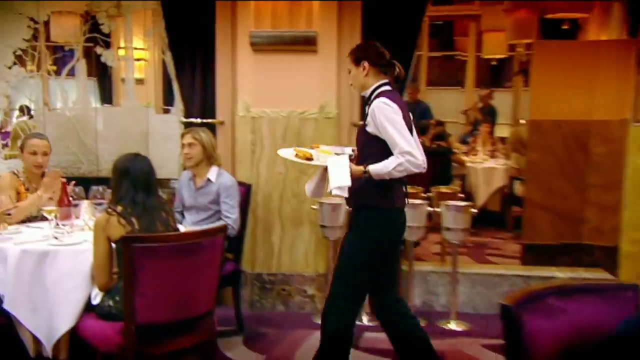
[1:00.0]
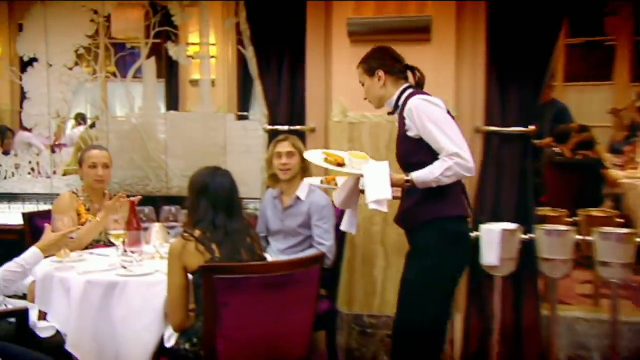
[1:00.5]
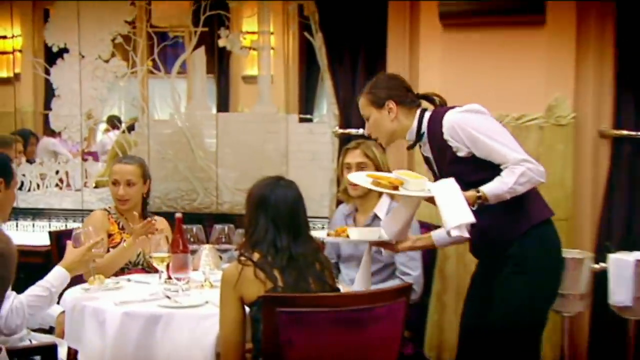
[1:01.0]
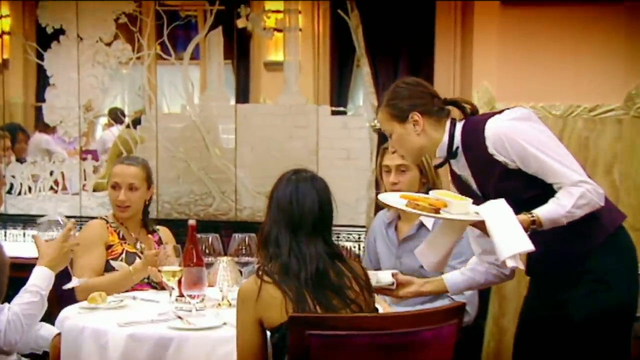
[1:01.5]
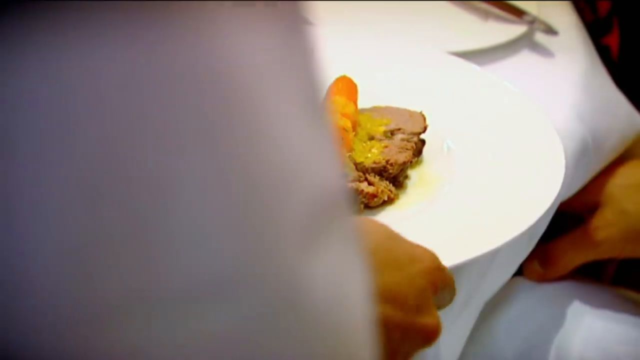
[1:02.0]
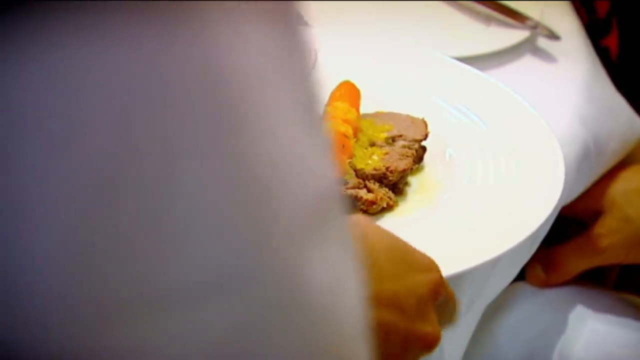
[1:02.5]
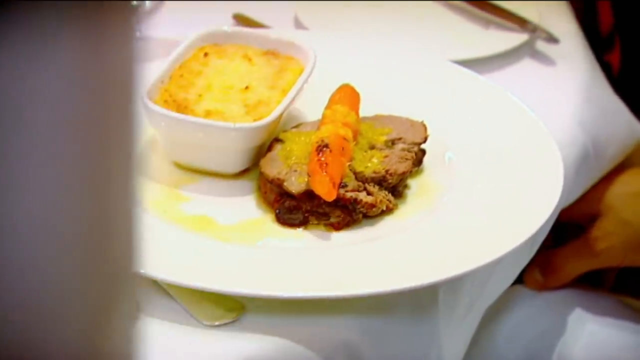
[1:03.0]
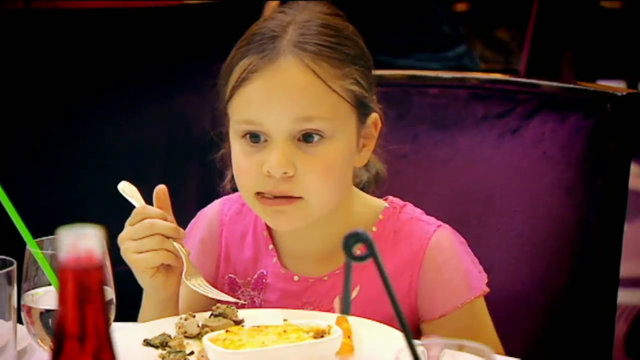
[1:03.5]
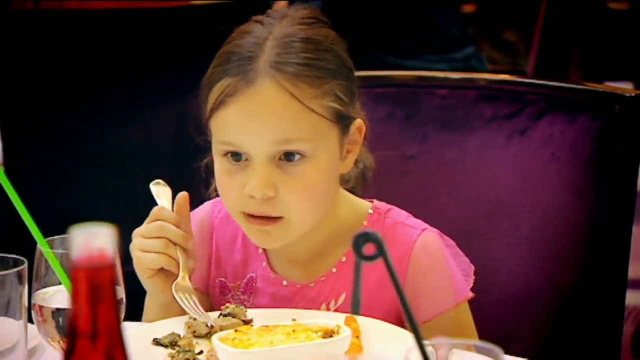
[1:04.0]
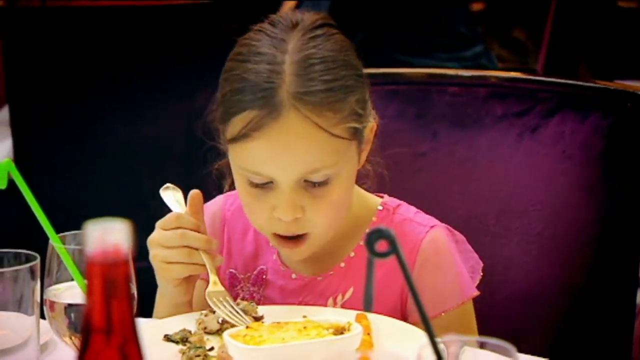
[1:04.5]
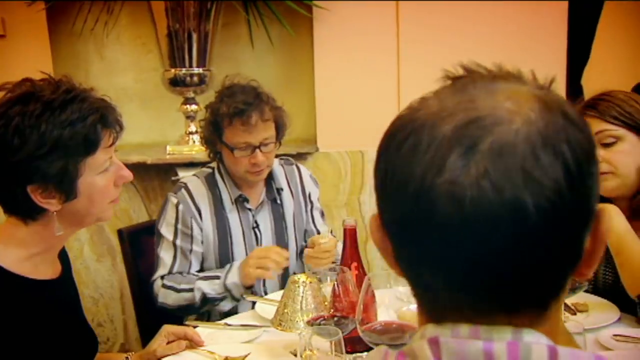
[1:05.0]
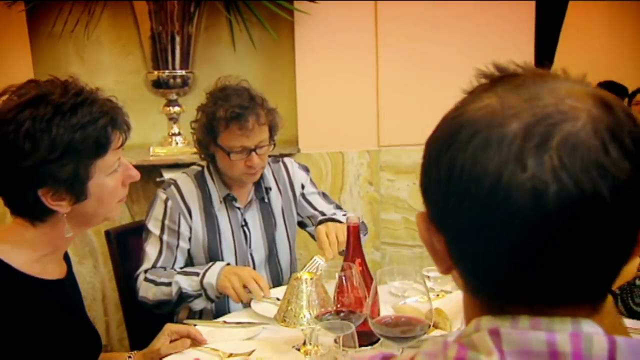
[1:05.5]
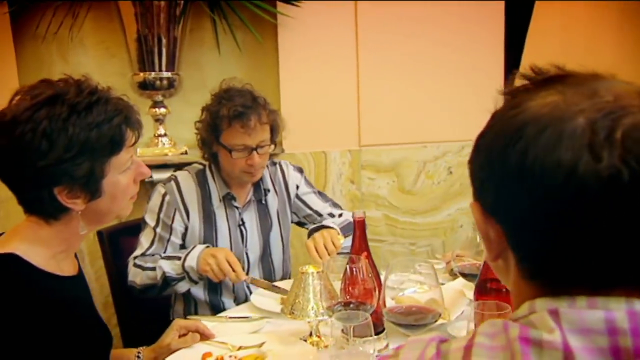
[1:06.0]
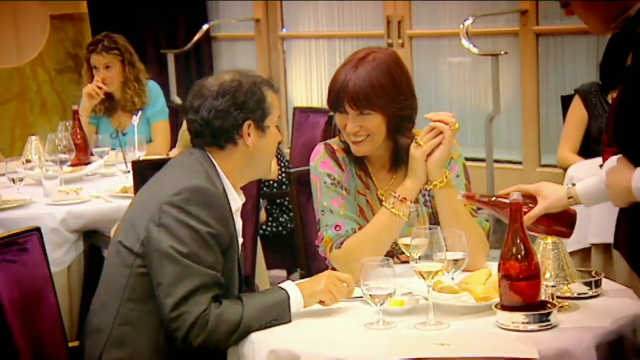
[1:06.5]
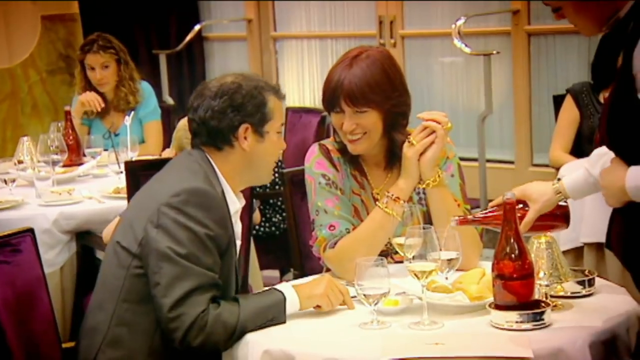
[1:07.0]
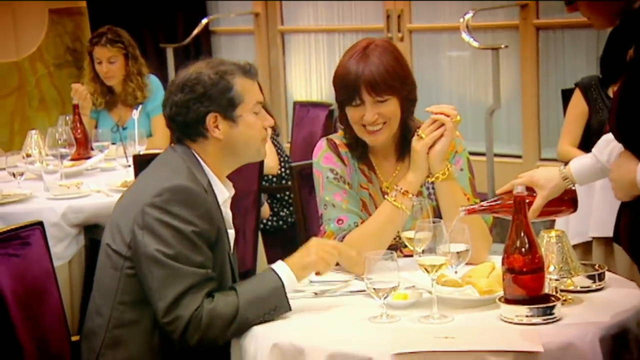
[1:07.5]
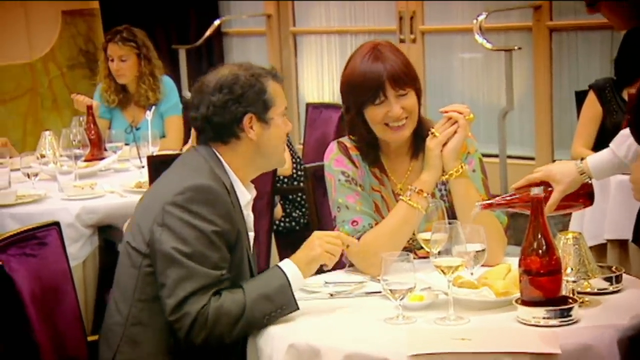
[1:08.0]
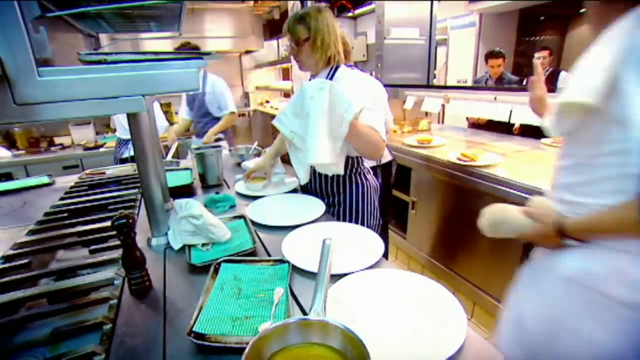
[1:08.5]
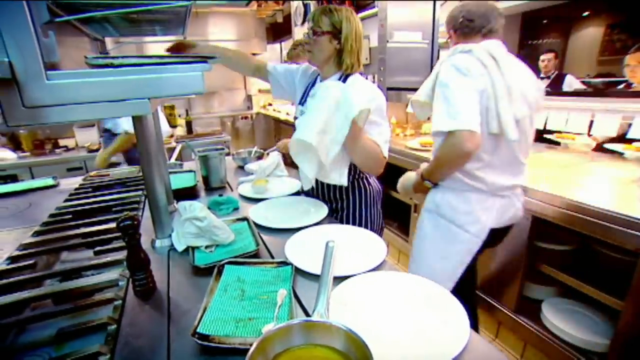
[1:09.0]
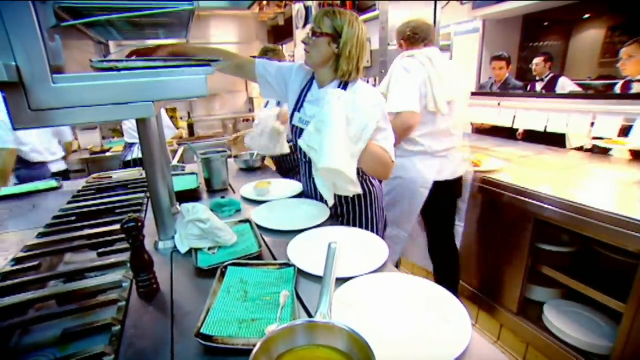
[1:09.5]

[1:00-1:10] A waitress walks toward people sitting at a table having wine, two men and two women who are talking, and serves them. She is dressed in black and white with her hair tied at the back. She lays down plates of food: a piece of steak with a carrot on top, sauce, and some soup on the other side of the meat. The people eat, talk, chat and drink wine.